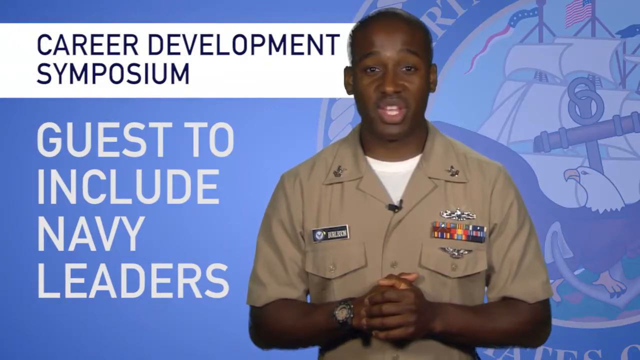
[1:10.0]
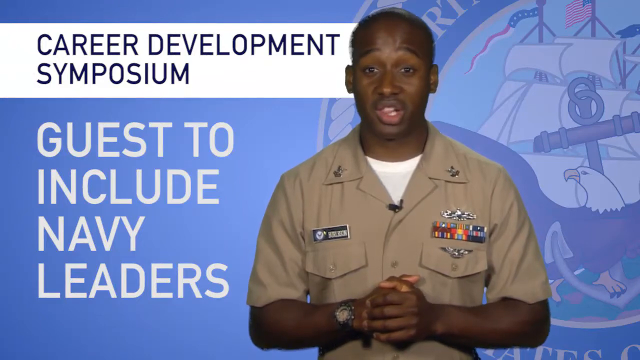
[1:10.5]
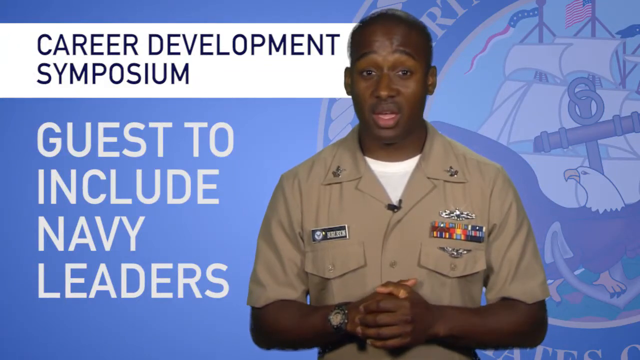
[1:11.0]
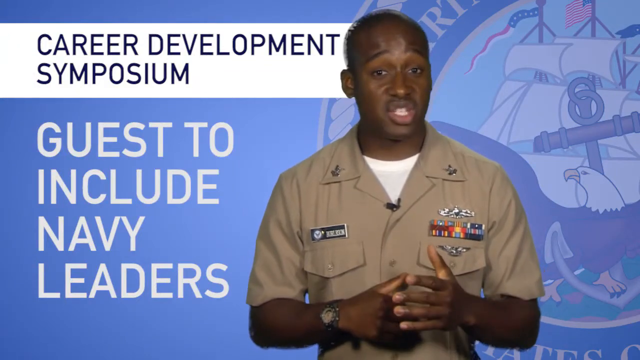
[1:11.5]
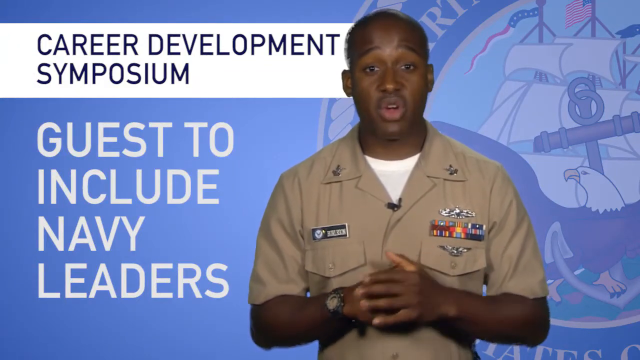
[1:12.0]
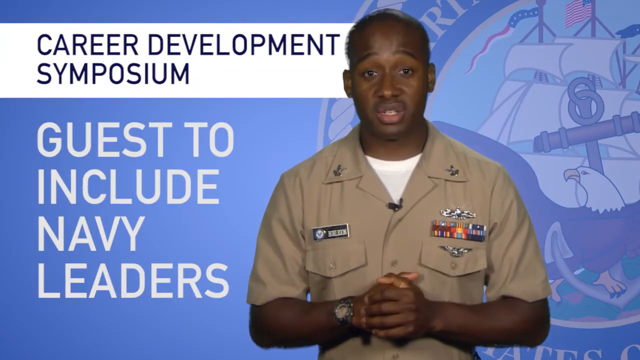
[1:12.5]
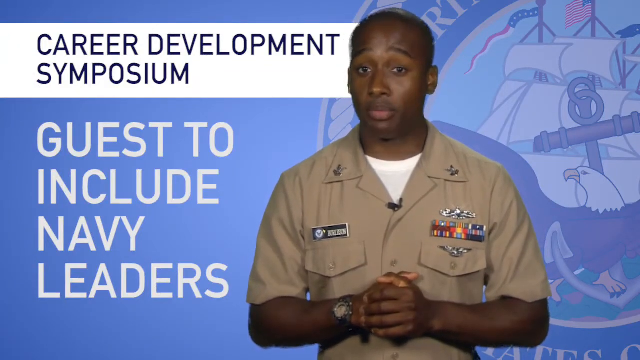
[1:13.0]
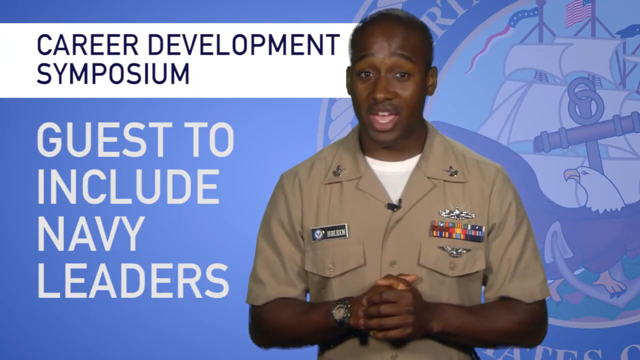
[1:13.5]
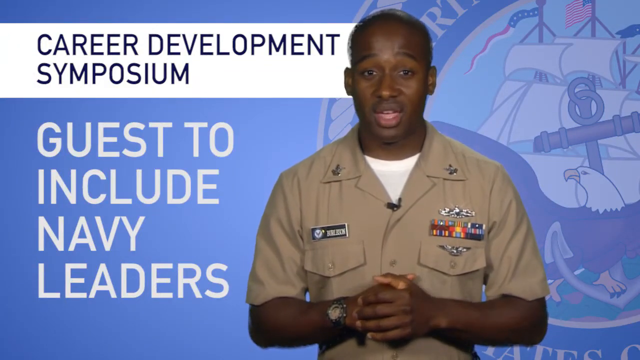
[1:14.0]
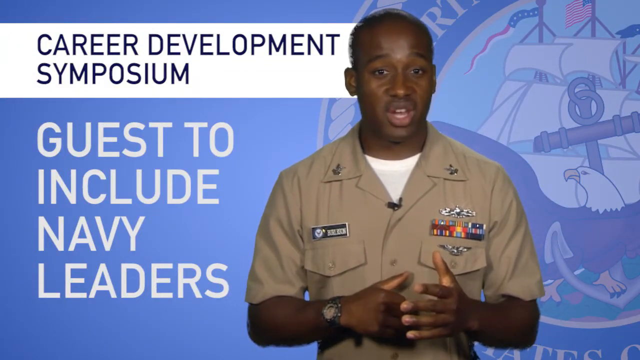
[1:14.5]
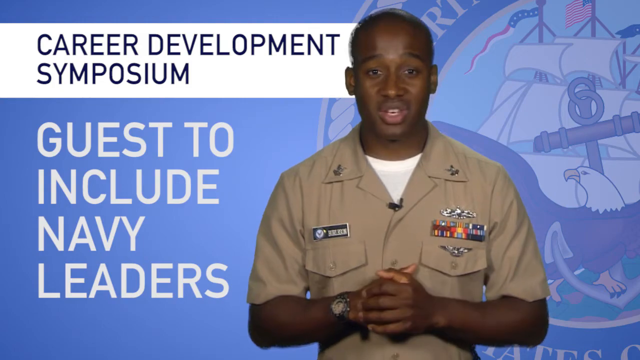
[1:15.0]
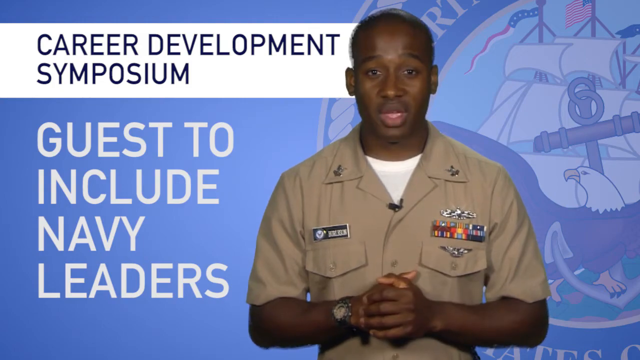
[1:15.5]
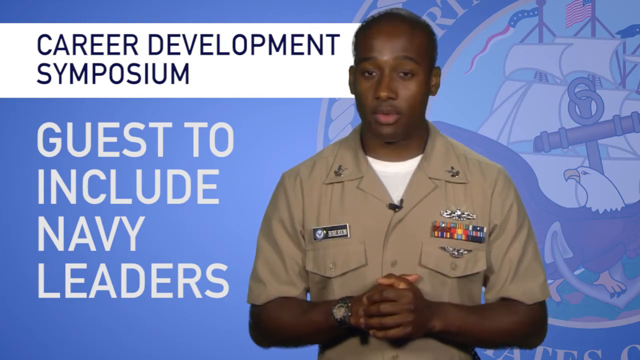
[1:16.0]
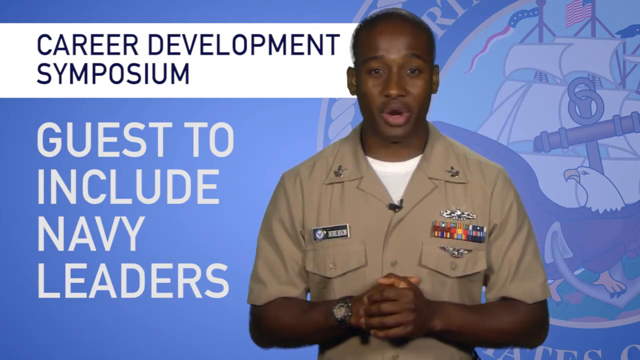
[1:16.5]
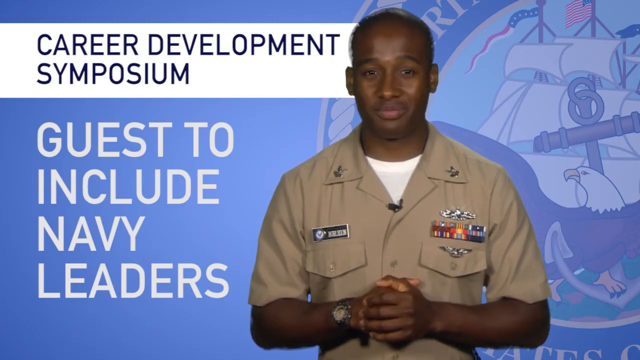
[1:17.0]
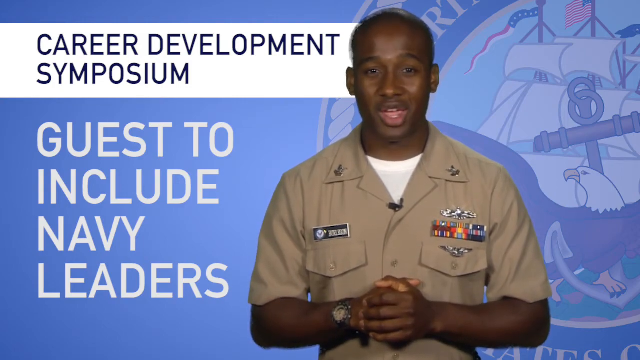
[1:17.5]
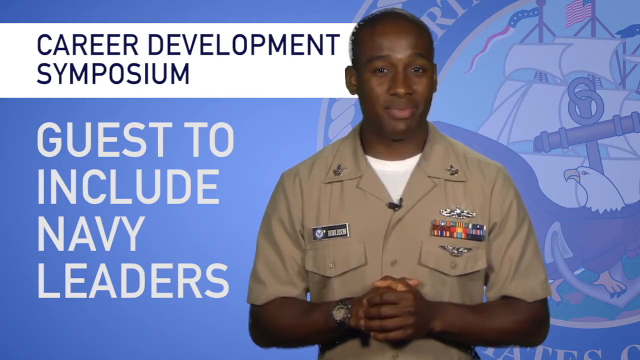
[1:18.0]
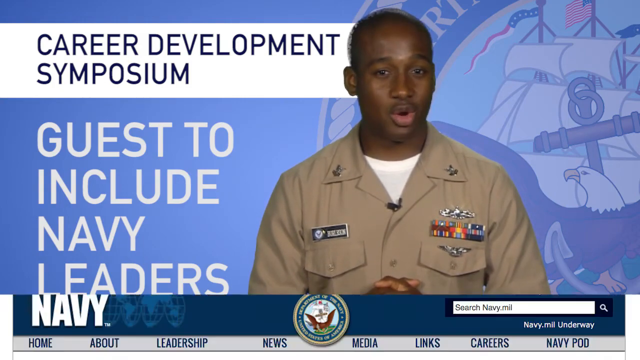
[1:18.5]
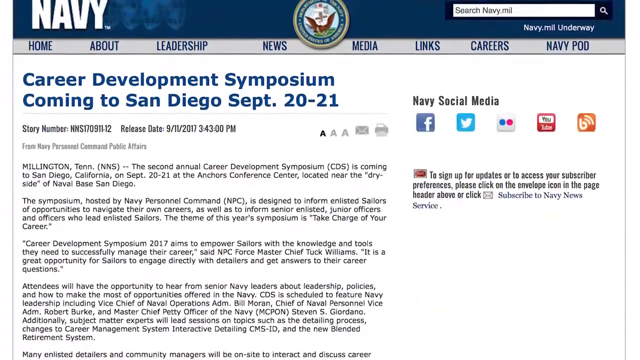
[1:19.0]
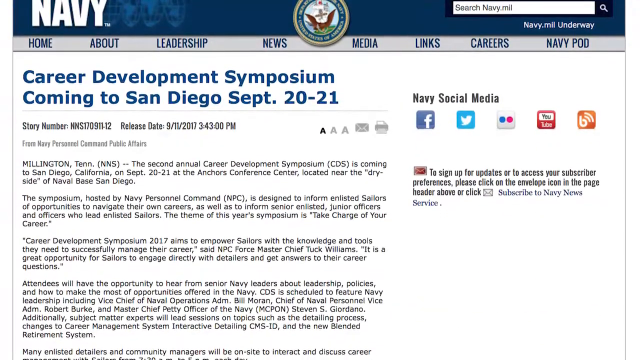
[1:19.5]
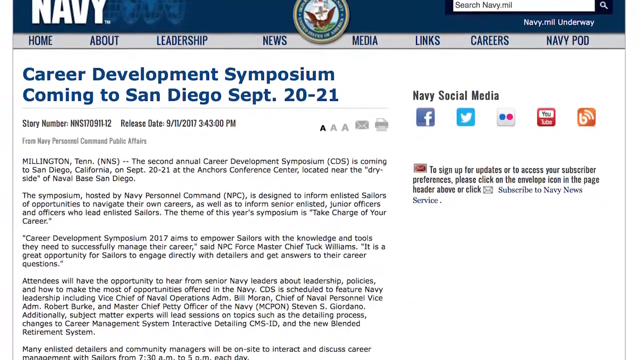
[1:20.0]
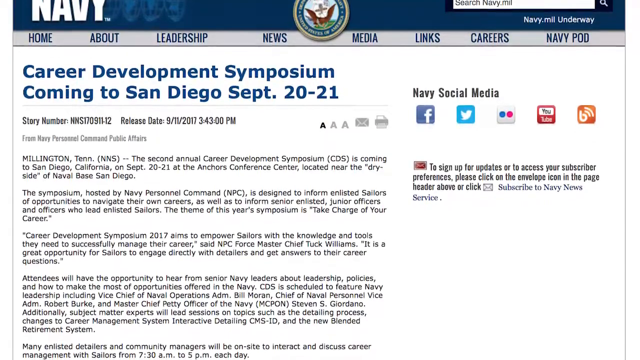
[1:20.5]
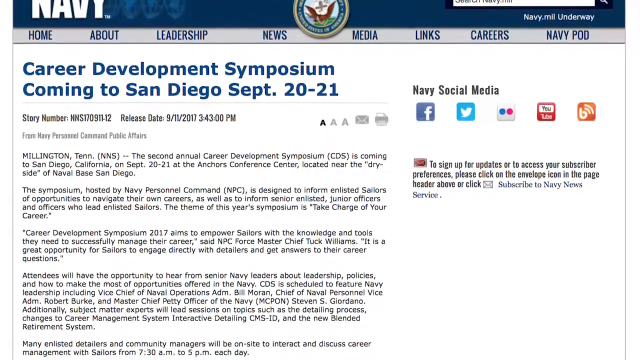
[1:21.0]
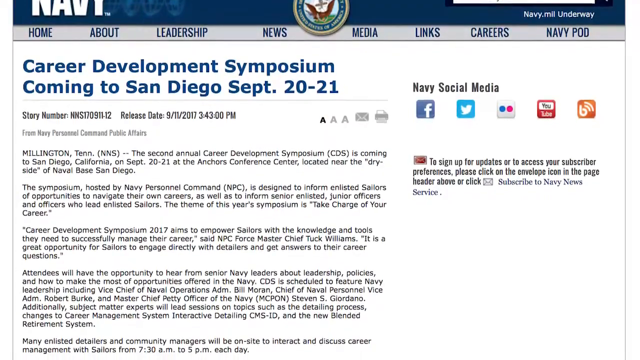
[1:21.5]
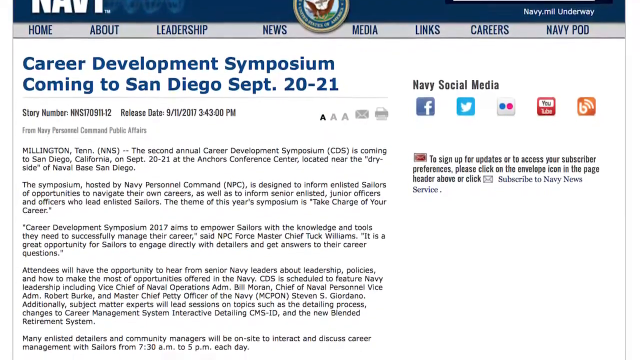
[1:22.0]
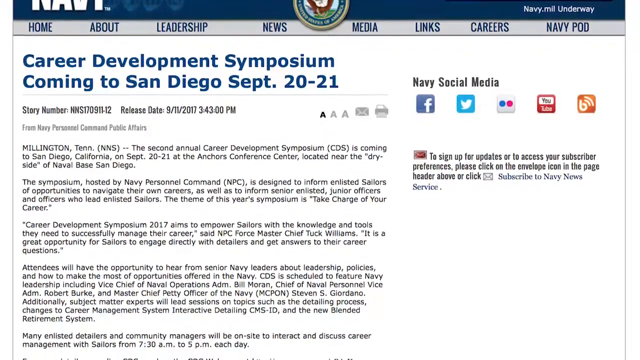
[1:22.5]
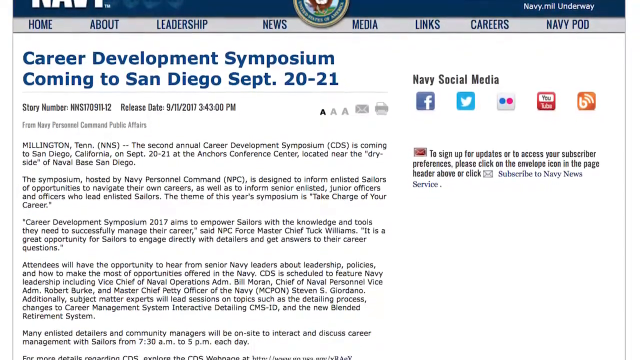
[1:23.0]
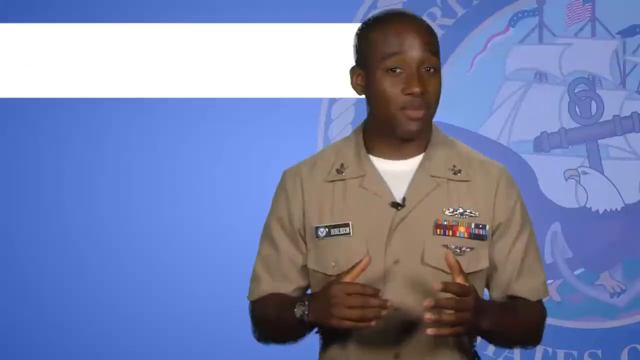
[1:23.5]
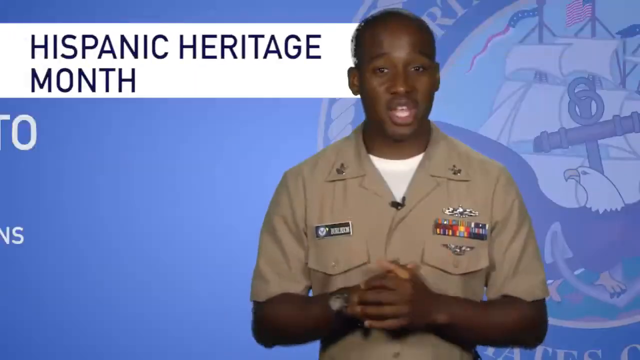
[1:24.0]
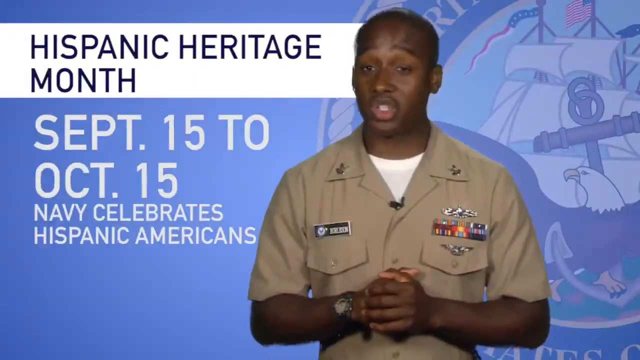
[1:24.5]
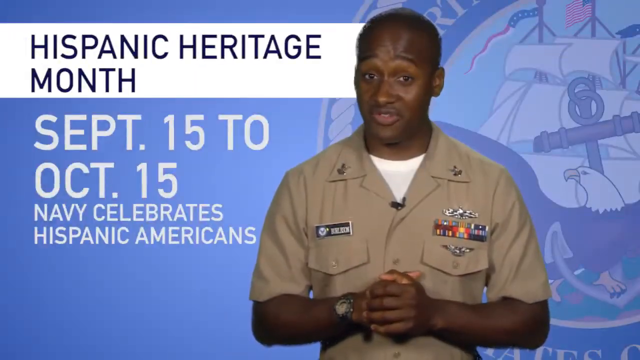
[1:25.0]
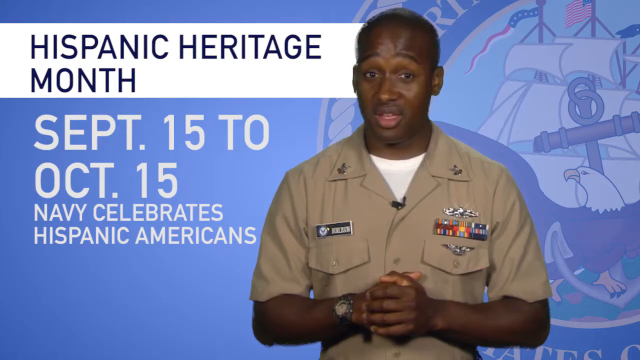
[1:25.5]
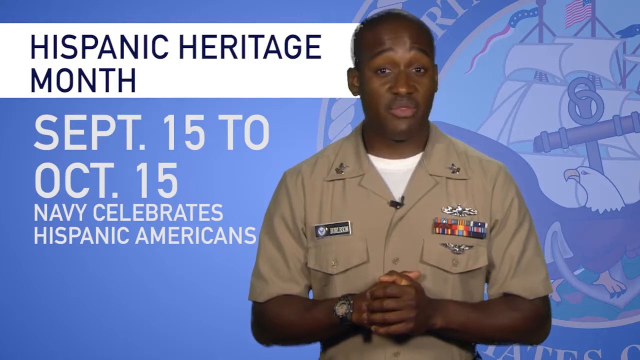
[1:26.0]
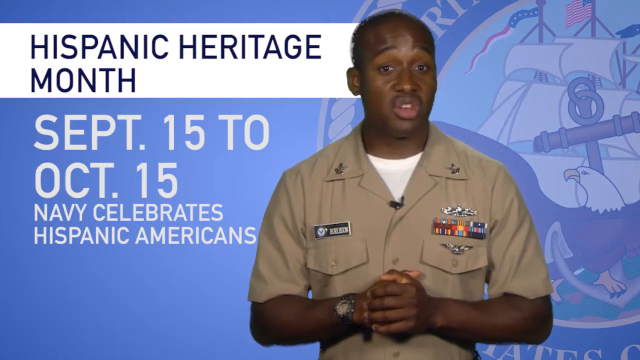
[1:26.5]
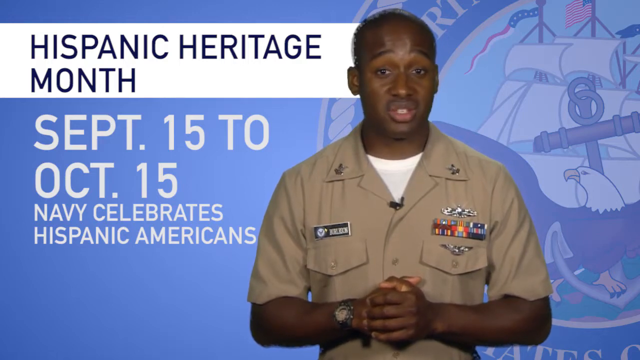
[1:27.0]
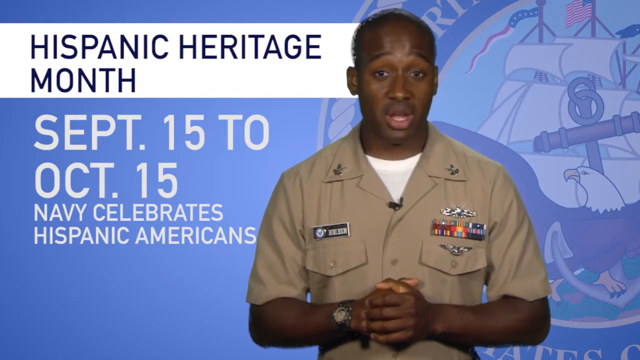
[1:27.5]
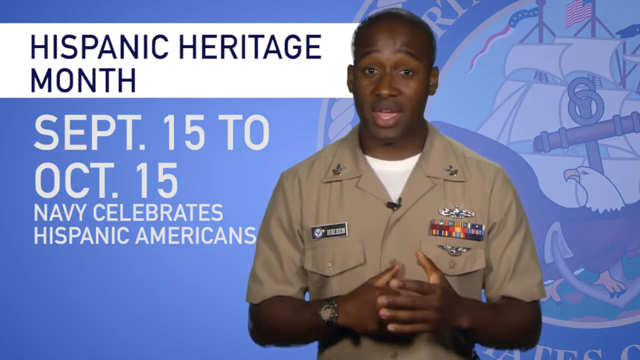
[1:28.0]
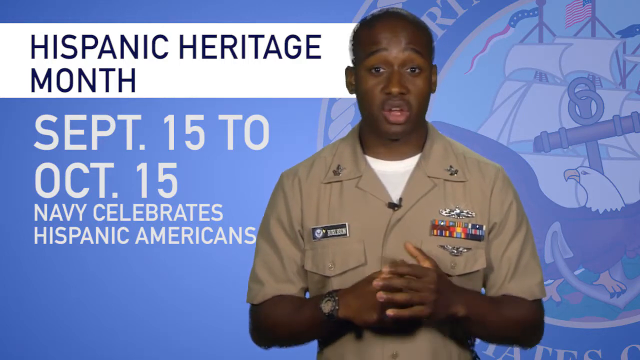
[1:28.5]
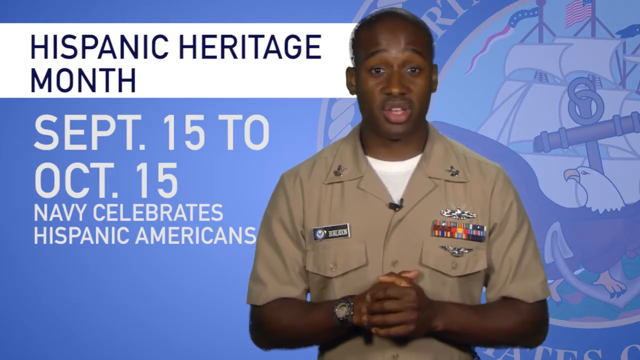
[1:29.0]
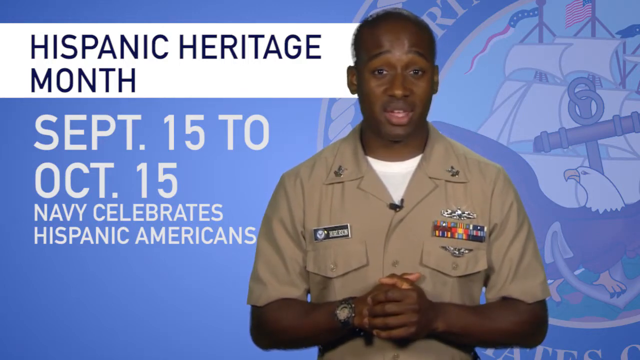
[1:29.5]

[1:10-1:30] A man gives a presentation with the title "Career Development Symposium", and underneath it is written "Guest to include Navy leaders." Next, an article appears titled "Career Development Symposium coming to San Diego September 20-21." It seems to be a website containing news about the navy, with some subheadings. On the right side next to the article are several social media logos: Facebook, Twitter and YouTube. Underneath them is an email to subscribe to Navy news services. The article contains details of the story, and the release date is 9-10-2010. The video returns to the man, and the heading on the left reads "Hispanic Heritage Month", with "September 15th to October 15th. Navy celebrates Hispanic Americans." written underneath.